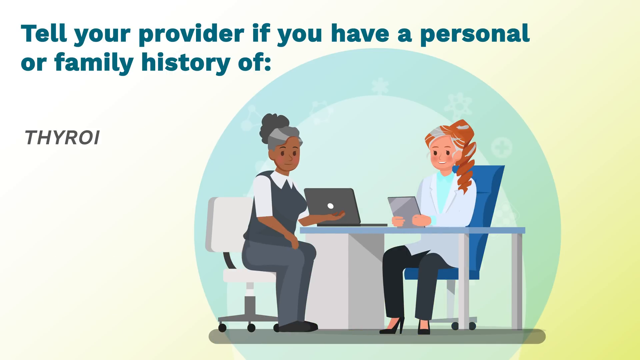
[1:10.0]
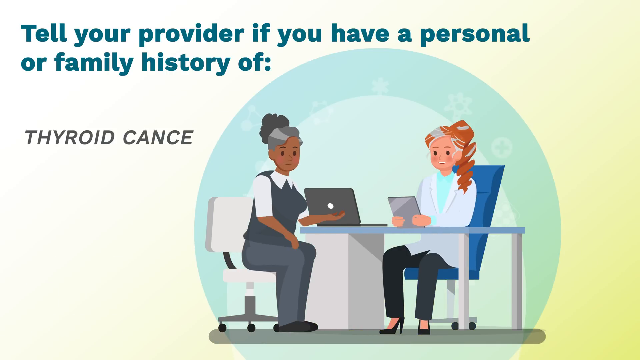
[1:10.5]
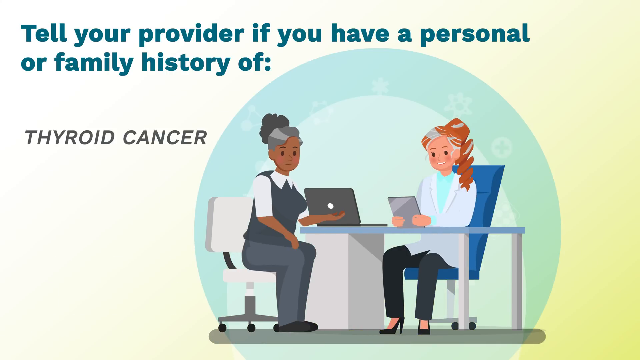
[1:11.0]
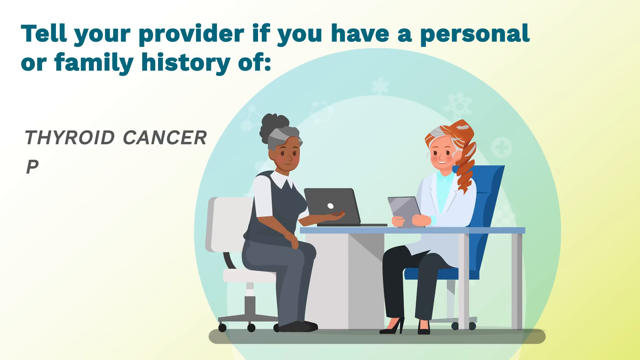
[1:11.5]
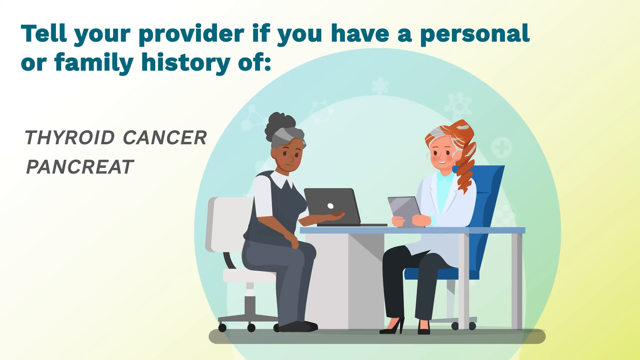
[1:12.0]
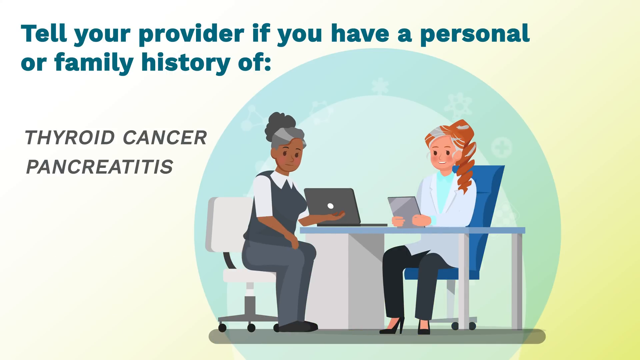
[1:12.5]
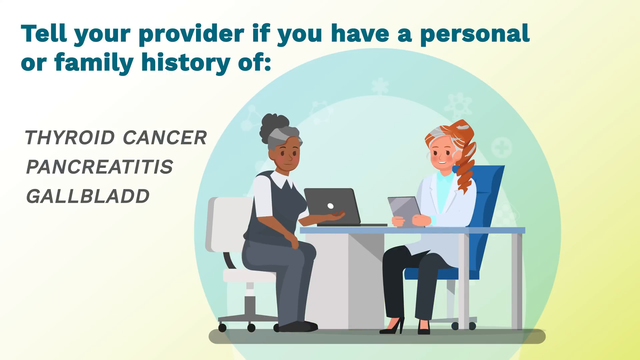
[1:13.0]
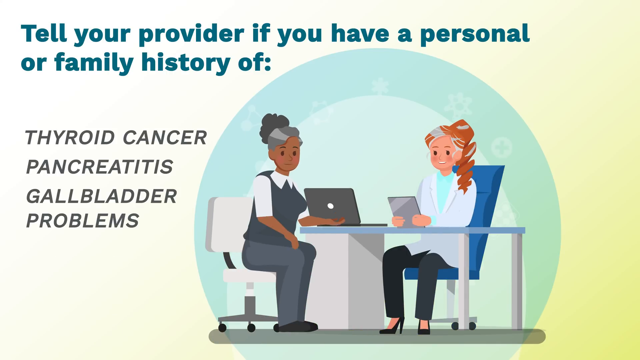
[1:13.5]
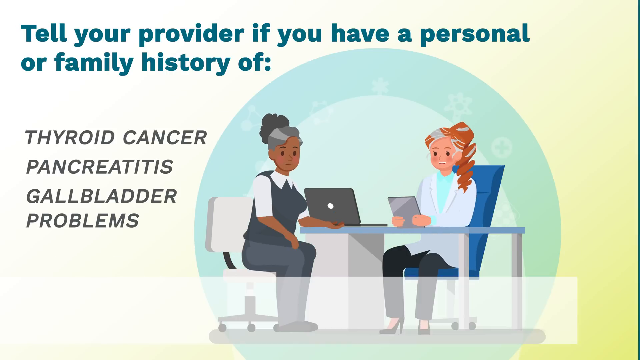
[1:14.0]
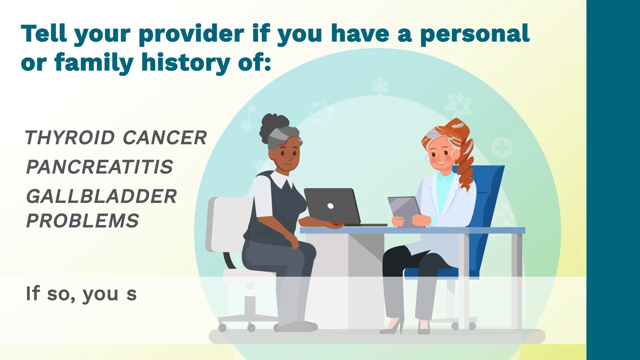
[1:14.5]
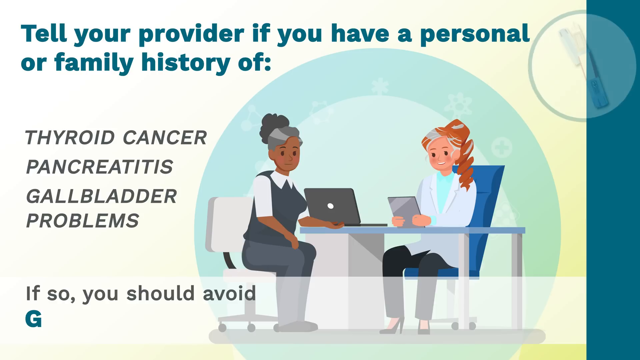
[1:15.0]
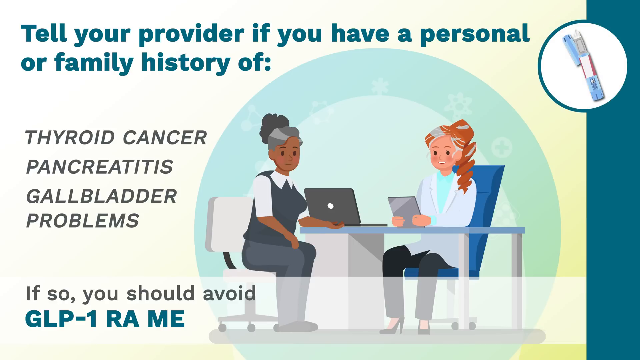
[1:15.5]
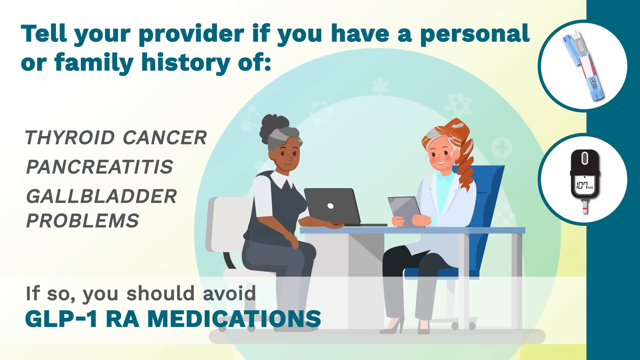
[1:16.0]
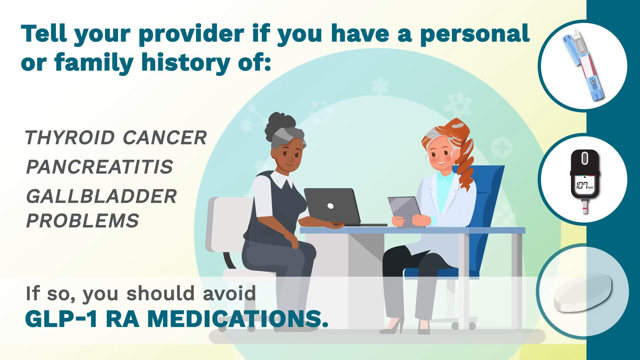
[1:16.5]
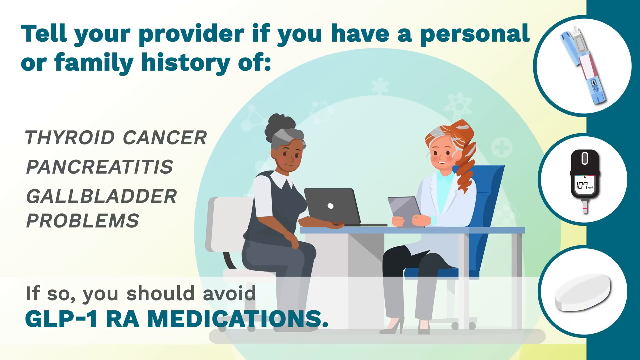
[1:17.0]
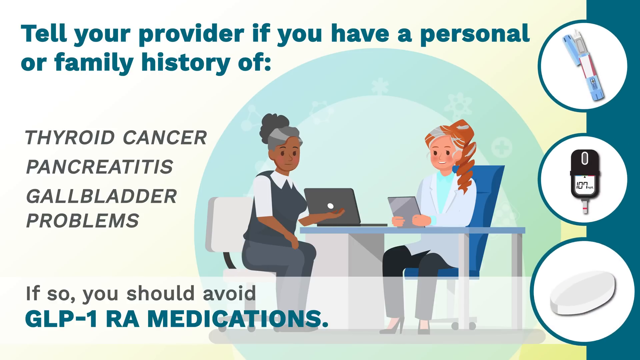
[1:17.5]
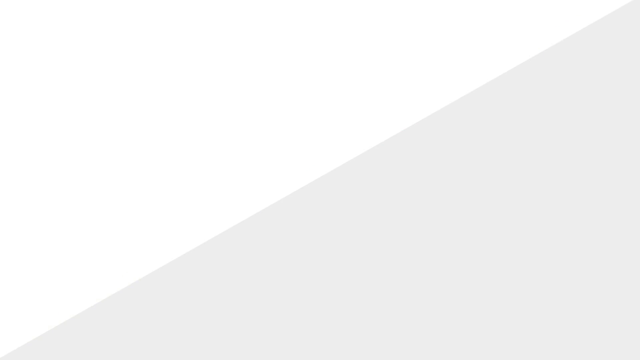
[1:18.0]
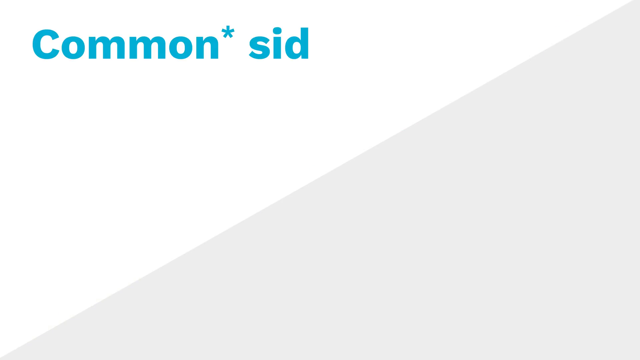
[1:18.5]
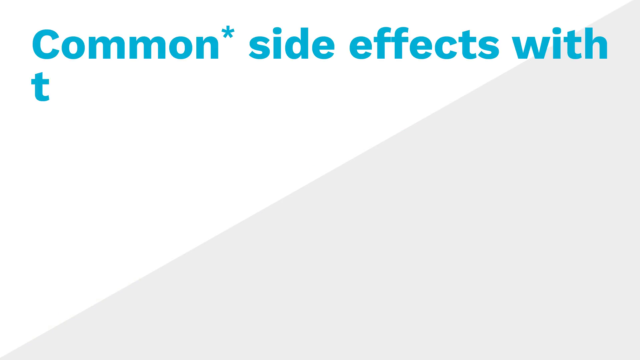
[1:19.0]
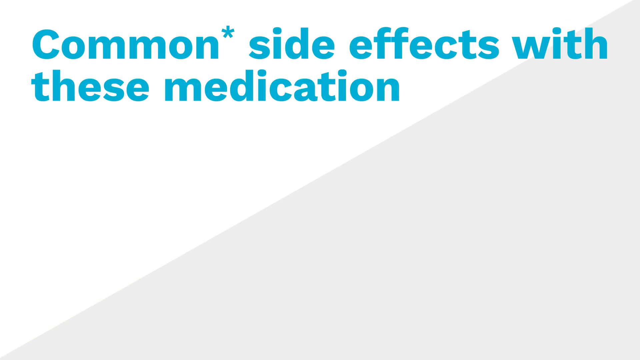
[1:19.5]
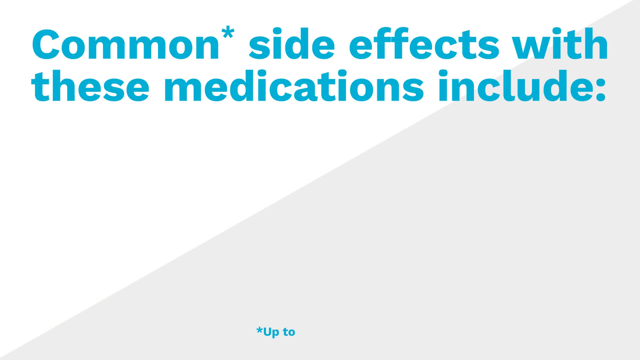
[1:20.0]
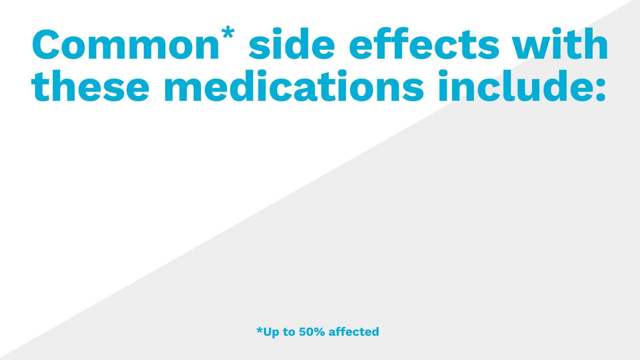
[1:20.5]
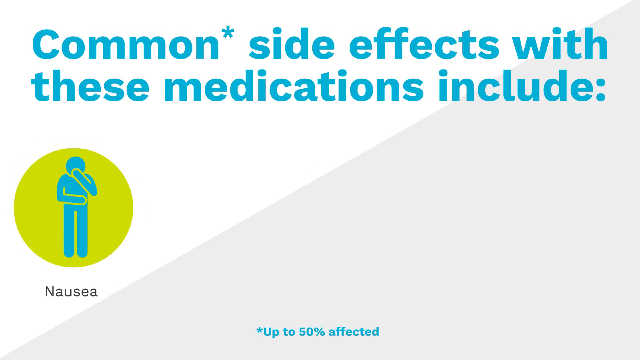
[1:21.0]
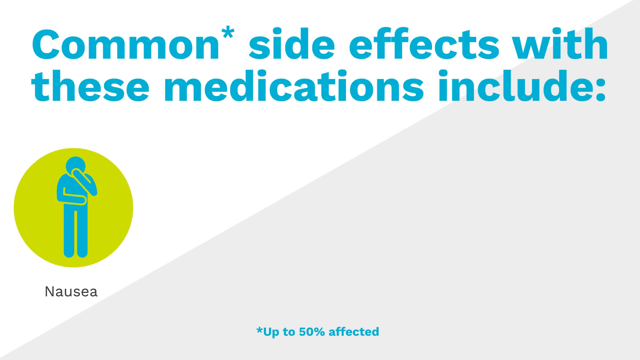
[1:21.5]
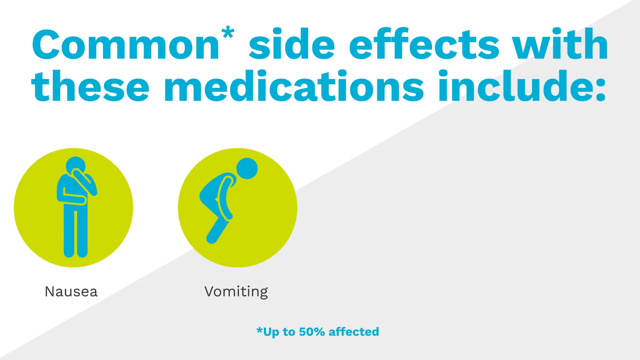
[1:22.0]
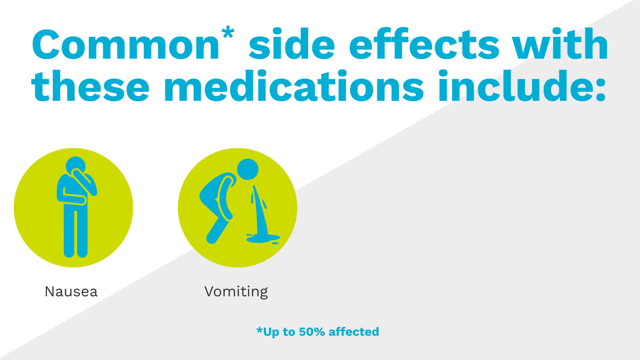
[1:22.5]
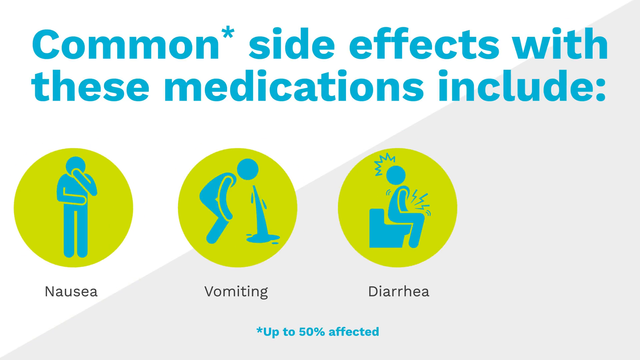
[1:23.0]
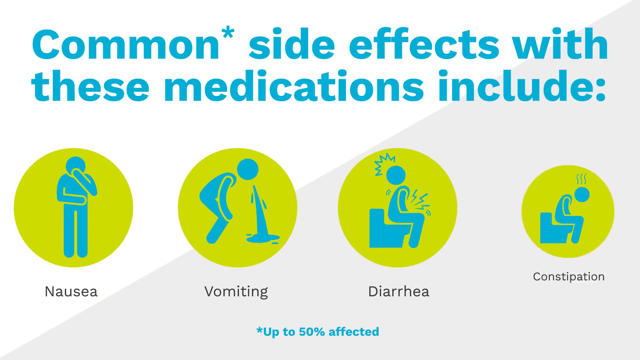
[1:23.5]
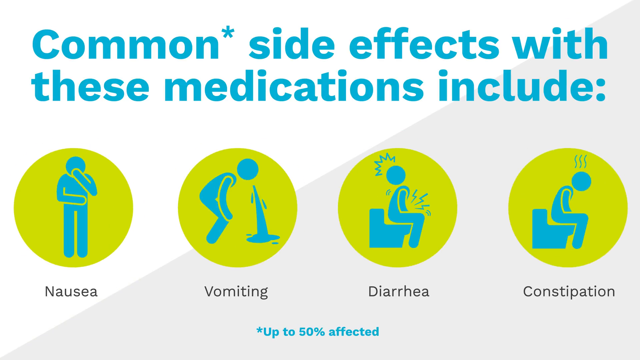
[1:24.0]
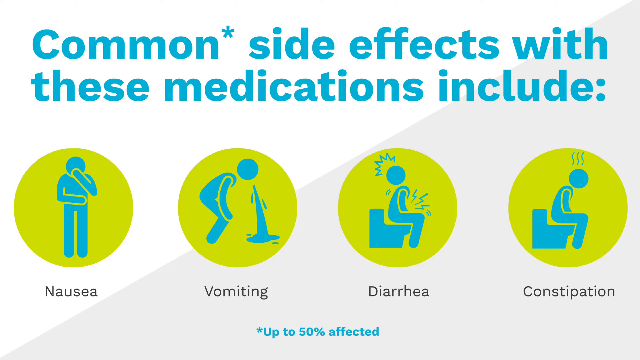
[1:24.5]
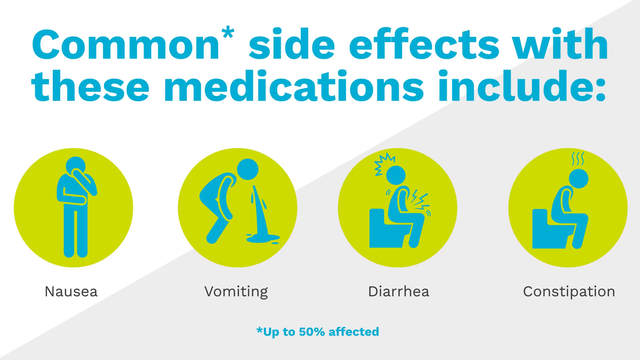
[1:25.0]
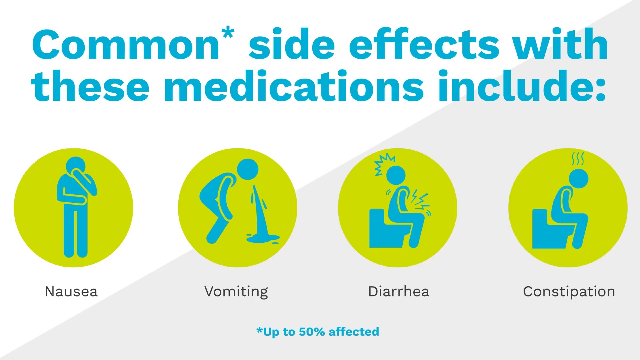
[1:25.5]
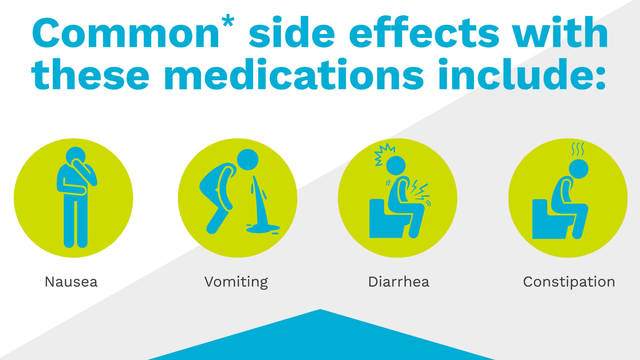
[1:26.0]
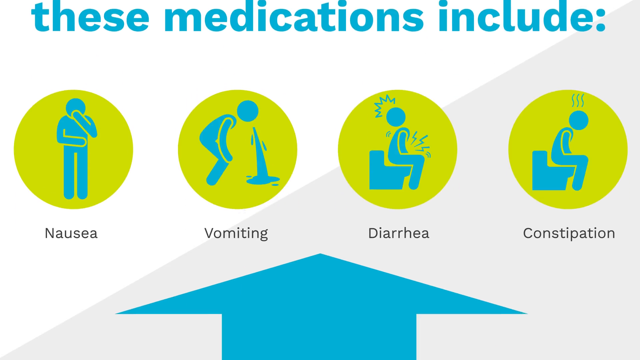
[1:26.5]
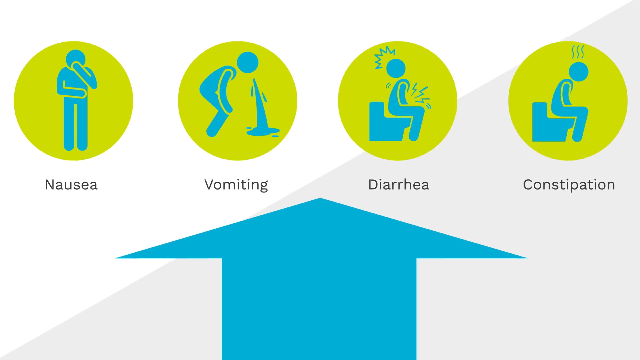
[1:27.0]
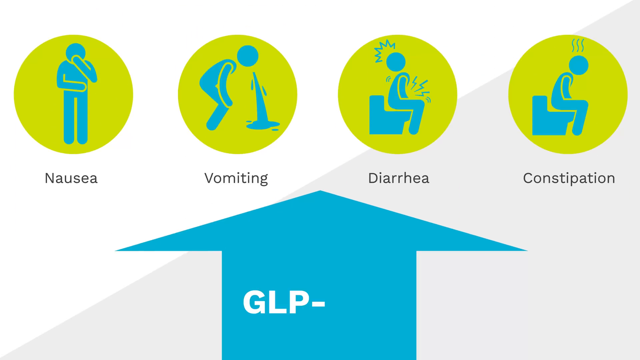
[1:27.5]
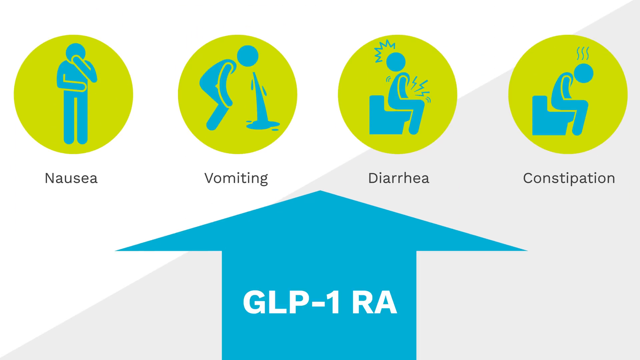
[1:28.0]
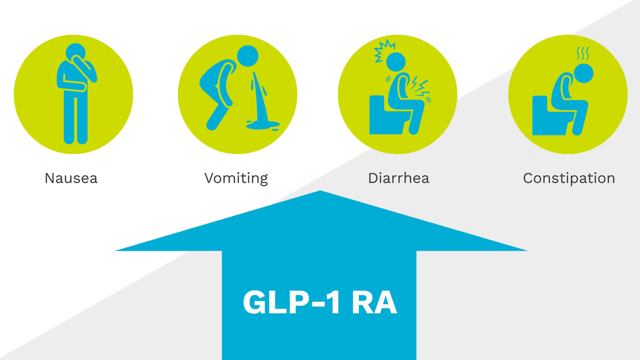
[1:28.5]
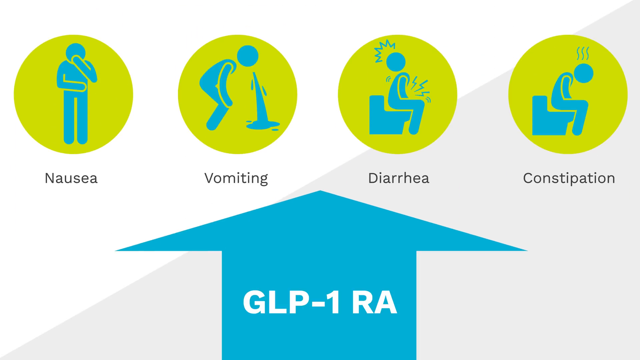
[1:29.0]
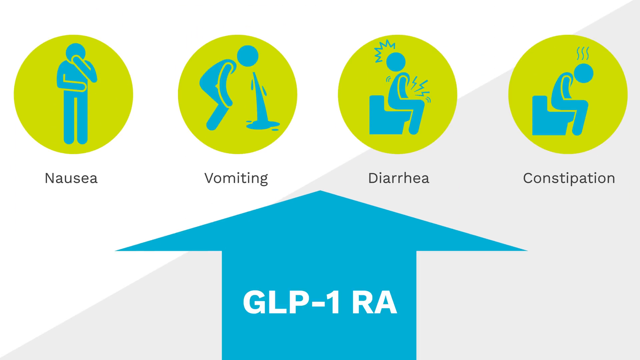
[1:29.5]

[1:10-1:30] A slide shows a drawing of a woman talking to a woman in a white lab coat, apparently a doctor. The title reads "tell your provider if you have a personal or family history of thyroid cancer, pancreatitis, gallbladder problems," and the slide indicates that, if so, RA medications should be avoided. The picture has a yellow background with a green sub-background showing the provider talking to the person; the provider is in a blue chair and the person is in a smaller white chair with a smaller back. Items on the right-hand side appear to include a glucose monitor and a couple of other things. The doctor wears darker clothes with a white smock. There is a black computer that looks like an Apple computer, but the doctor is looking at something like a small pad or notepad.